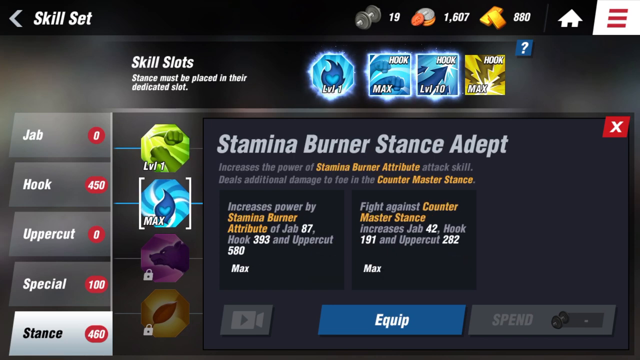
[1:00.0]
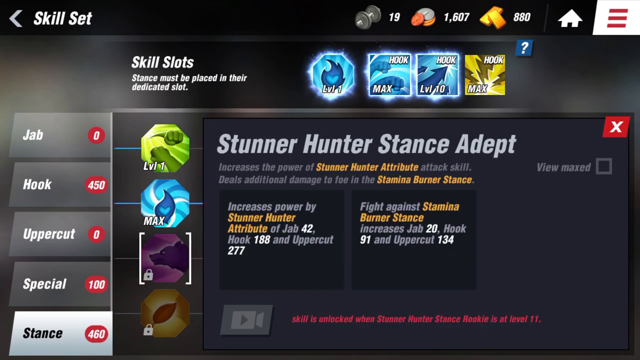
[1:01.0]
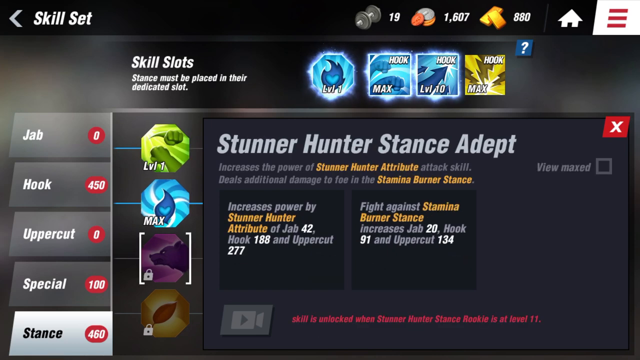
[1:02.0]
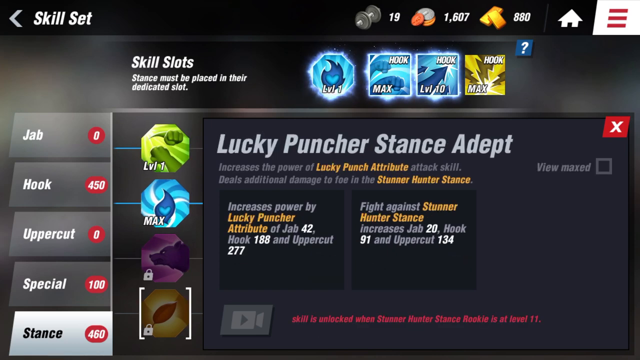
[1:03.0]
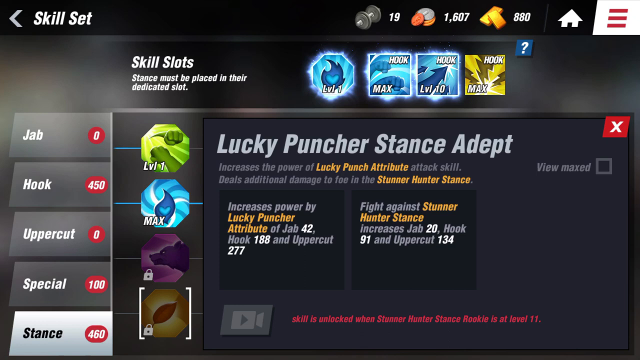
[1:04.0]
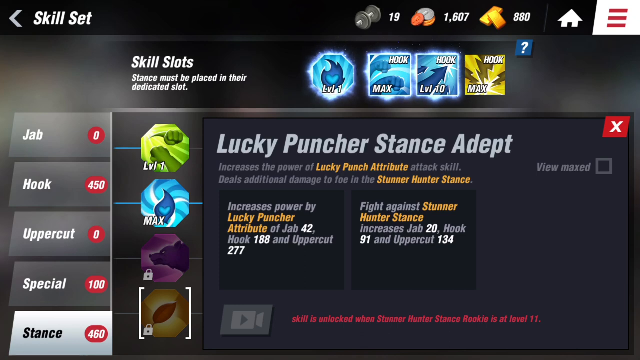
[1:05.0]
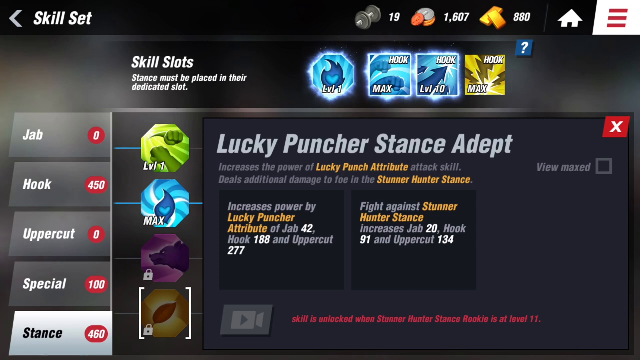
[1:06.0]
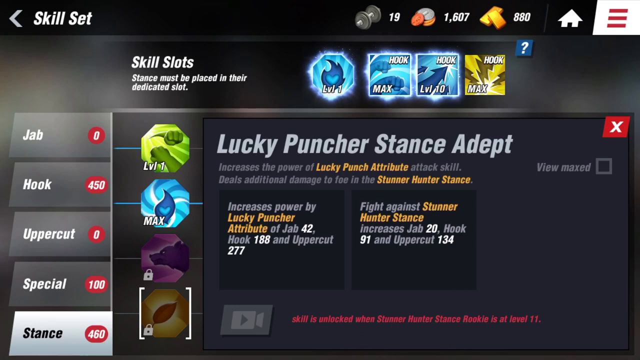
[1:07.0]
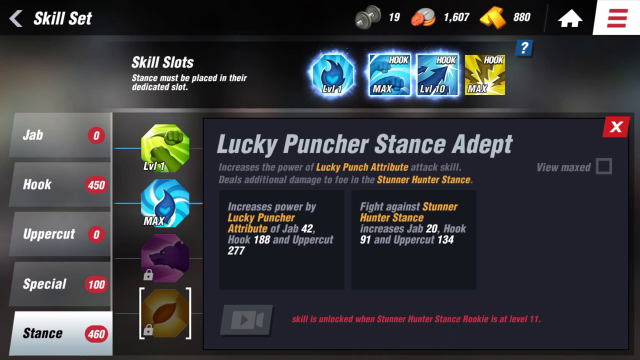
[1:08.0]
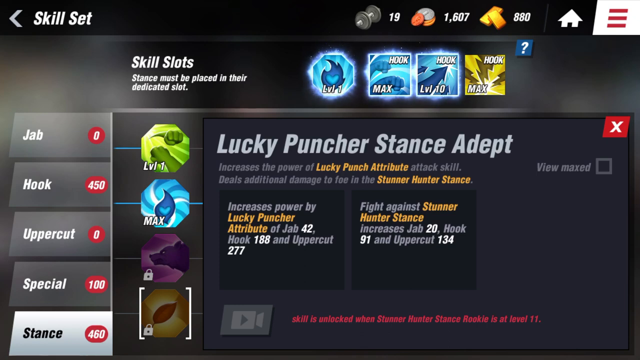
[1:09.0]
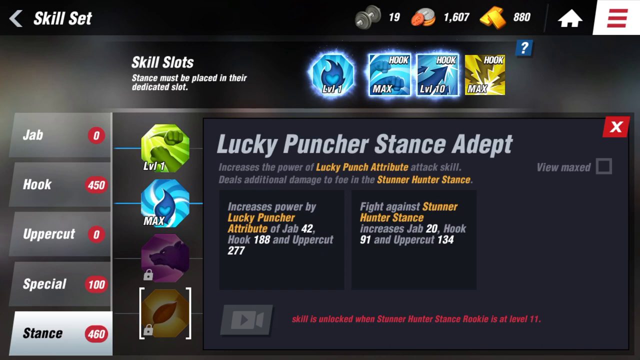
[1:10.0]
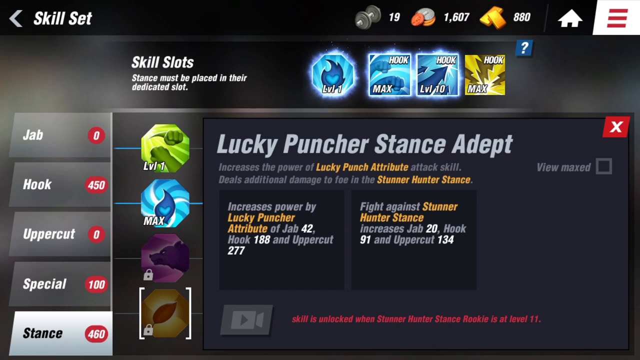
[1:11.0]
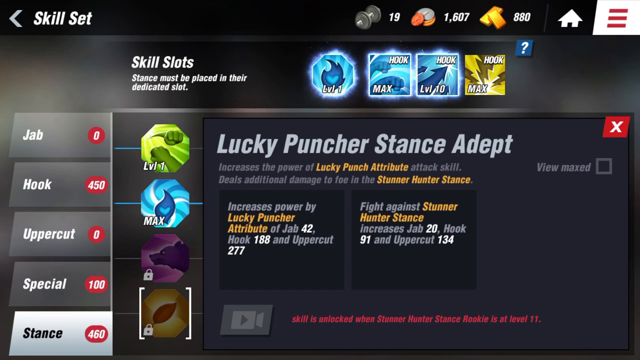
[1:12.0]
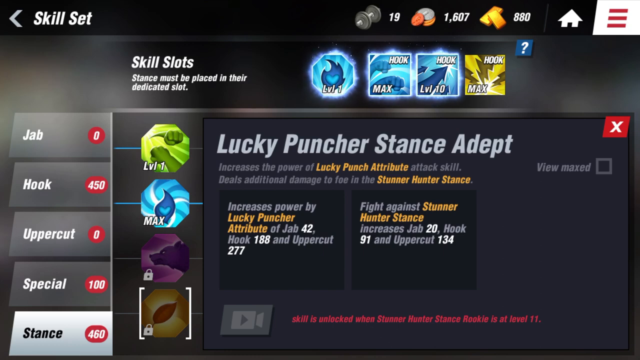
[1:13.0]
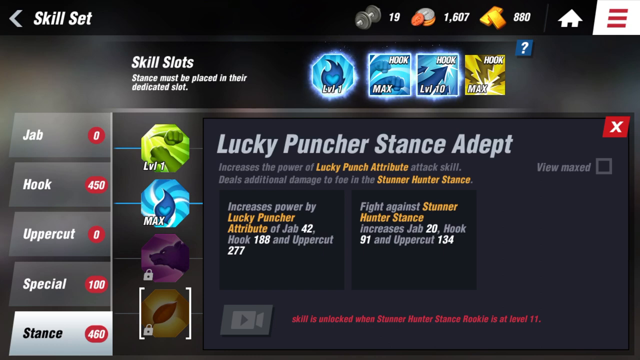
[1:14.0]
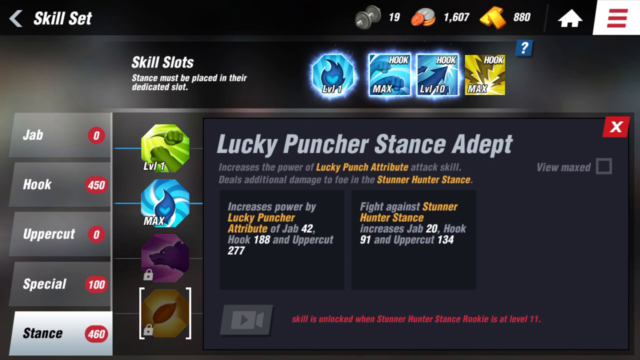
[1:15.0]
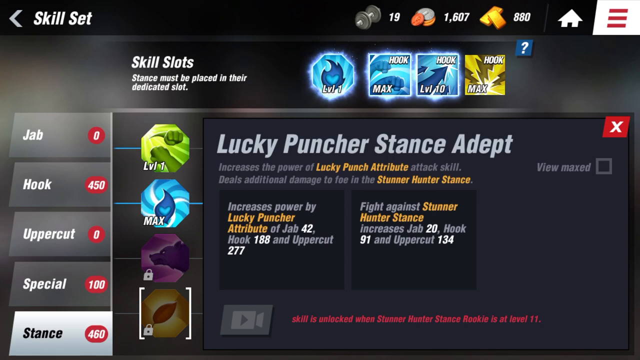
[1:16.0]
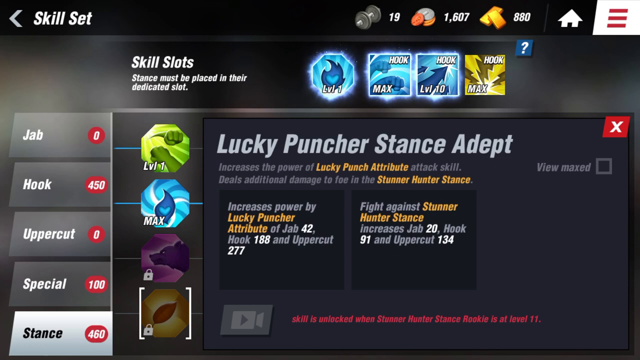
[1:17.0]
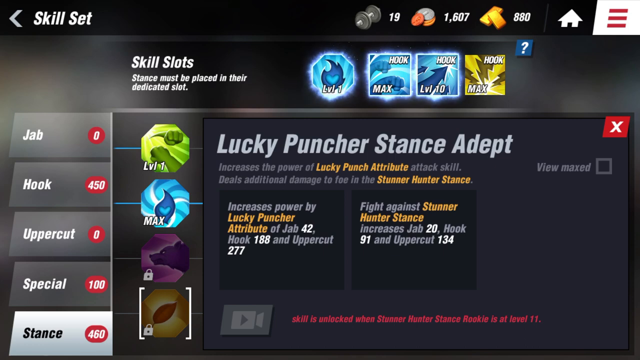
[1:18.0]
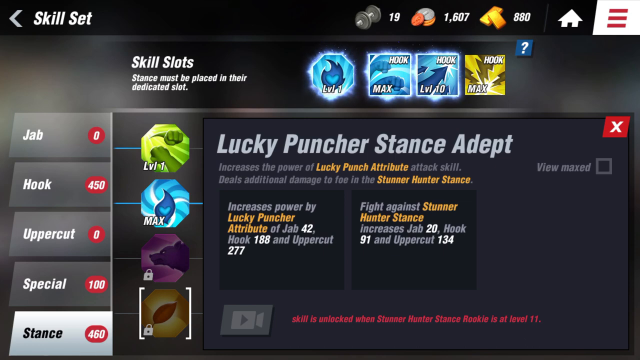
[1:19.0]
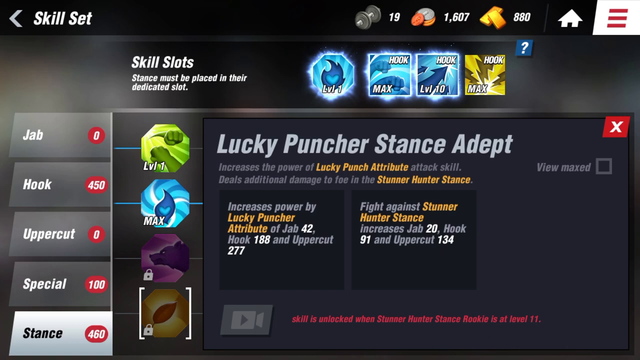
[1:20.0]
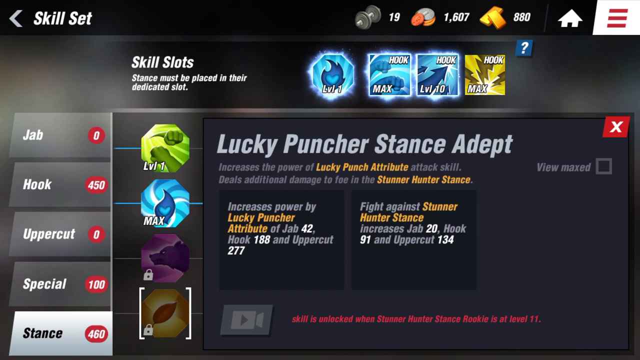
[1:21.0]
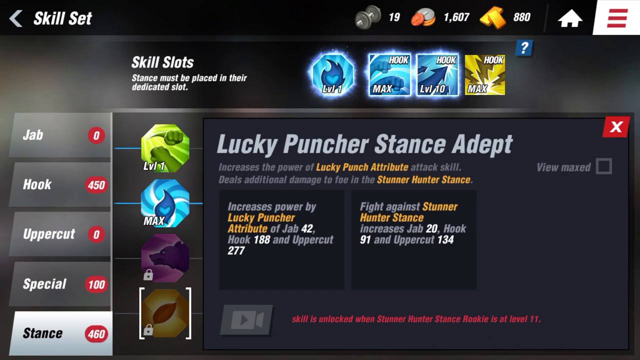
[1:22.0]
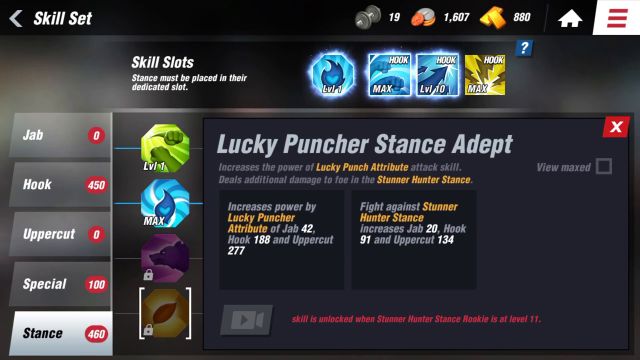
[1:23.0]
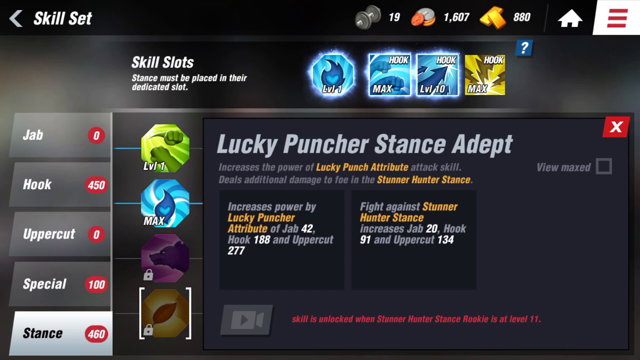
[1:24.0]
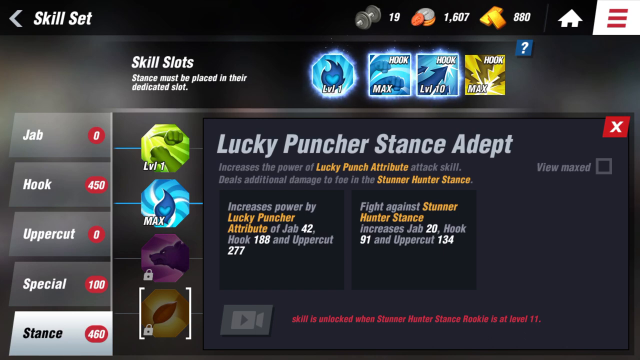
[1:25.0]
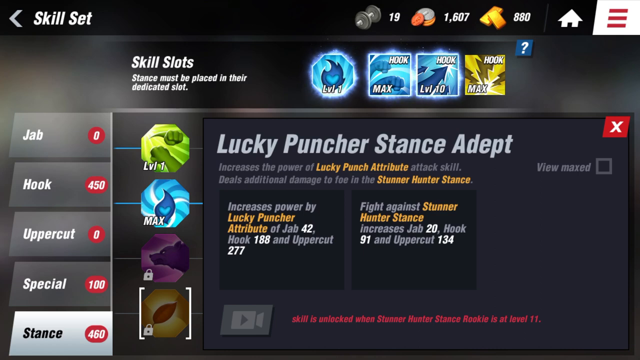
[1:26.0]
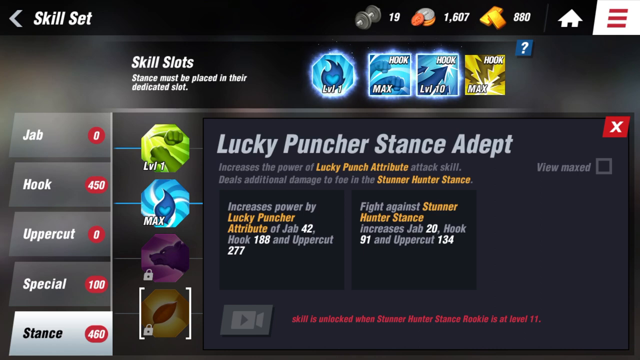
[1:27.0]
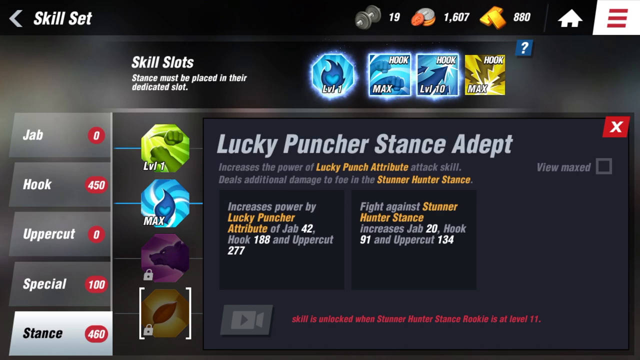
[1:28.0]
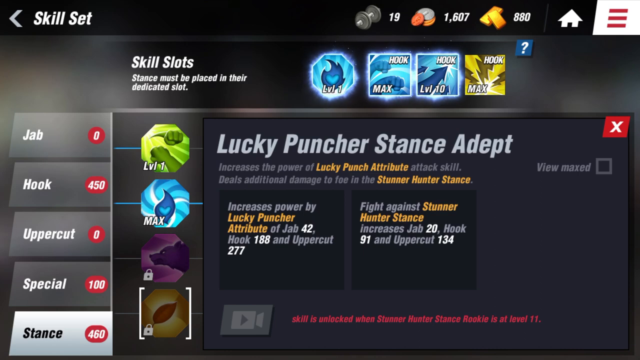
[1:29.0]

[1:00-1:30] The skill set page now shows more information: "skill slots" and "stance must be placed in their dedicated slot". There is an octagon with blue fire in the middle and lighter blue fire behind it, marked level one. Next to it are "hook" at max, "hook" at level 10, and "hook" at max; the first two are blue and the last is yellow. The same icons remain at the top: the dumbbell with 19, coins with 1,607, gold bars with 880, the home icon and the three red lines. Down the left side are jab, hook, uppercut and special, with values of 0, 450, 0 and 100. There is a level one octagon in green, and beneath it a blue icon, apparently a fire symbol, with "max", and beneath that a locked icon in purple with what is almost a wolf on it. In the main body the heading reads "stamina burner stance adept", with a red cross next to it. Below it the text reads "increases the power of stamina burner attributes attack skill, deals additional damage to foe in the counter master stance", with "stamina burner attribute" and "counter master stance" in orange and the rest in grey. Two black boxes follow. One reads "increases power by stamina burner attribute" (in orange) with jab 87, hook 393 and uppercut 580, the numbers in white, and "max" in white beneath. The other reads "fight against counter master stance", with "counter master stance" in orange, increasing jab 42, hook 191 and uppercut 282, the numbers in white, and "max" in white beneath. Below that is a blue square reading "equip". The video cuts to another screen titled "stunner hunter stance adept" with similar skill information, and a video icon appears beneath it along with some hard-to-read wording in red. Next comes "lucky puncher stance adept".